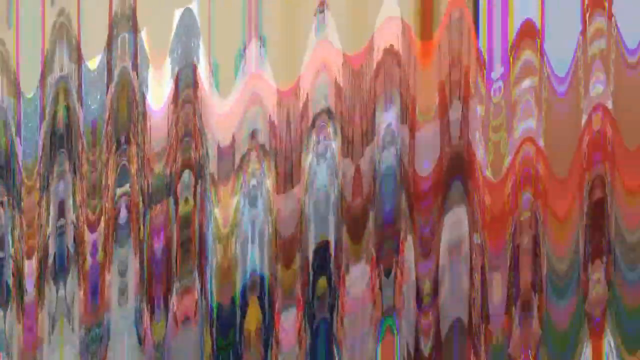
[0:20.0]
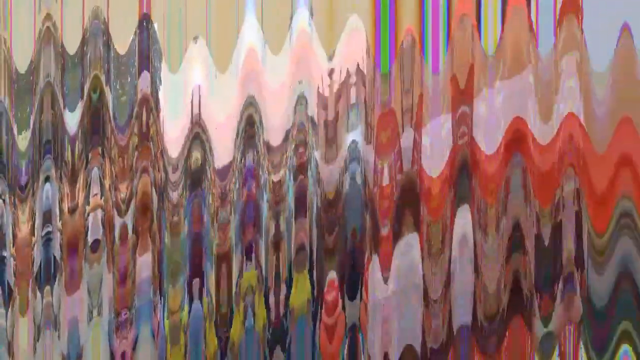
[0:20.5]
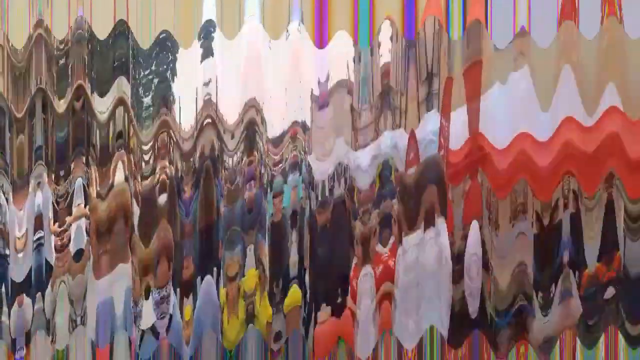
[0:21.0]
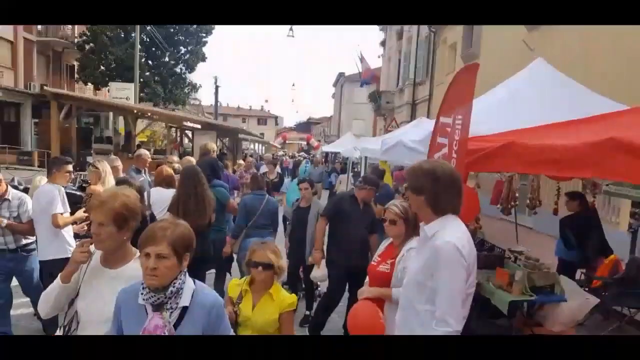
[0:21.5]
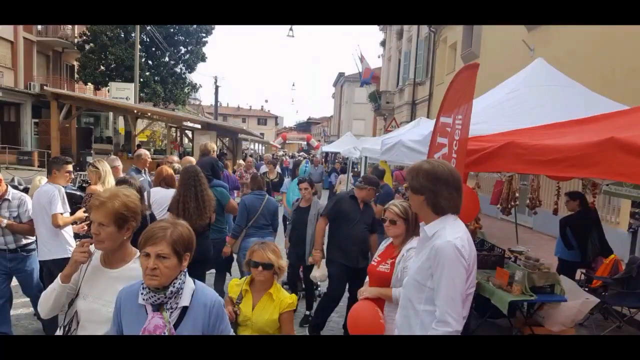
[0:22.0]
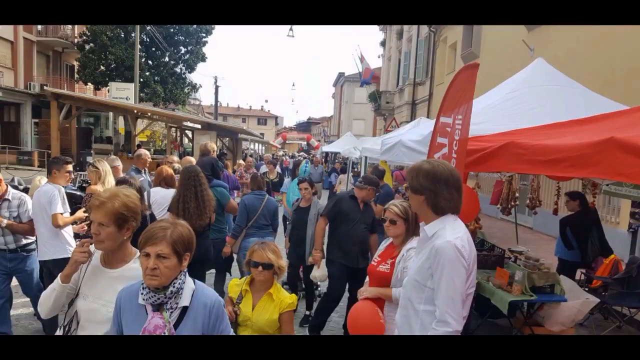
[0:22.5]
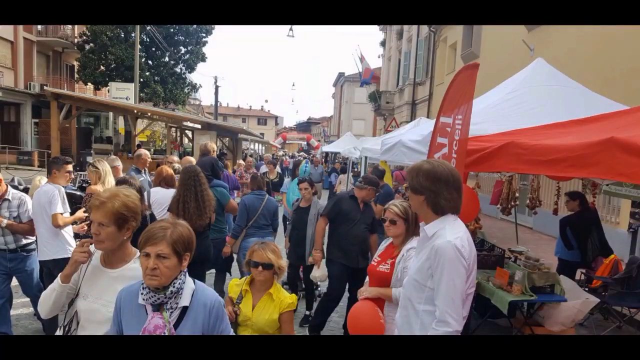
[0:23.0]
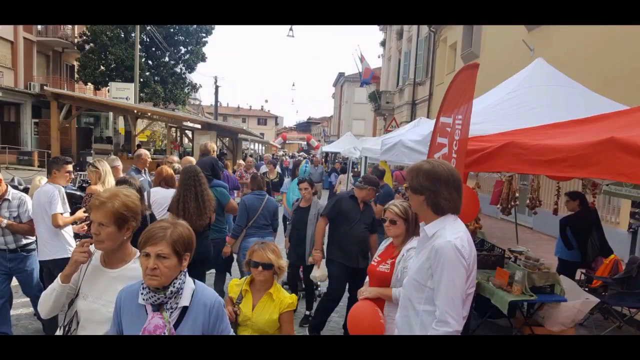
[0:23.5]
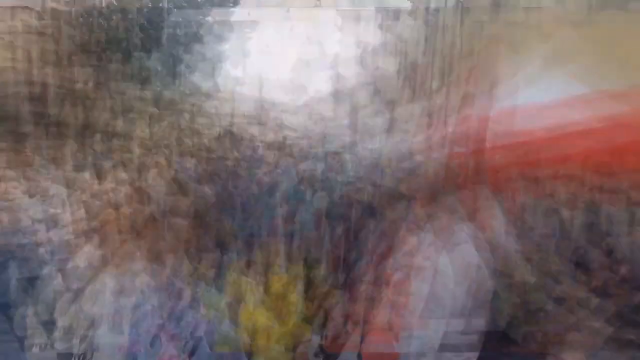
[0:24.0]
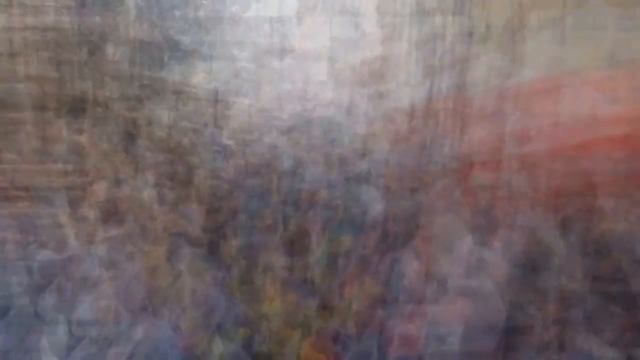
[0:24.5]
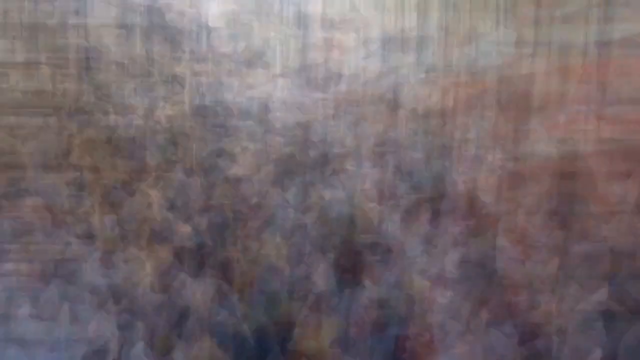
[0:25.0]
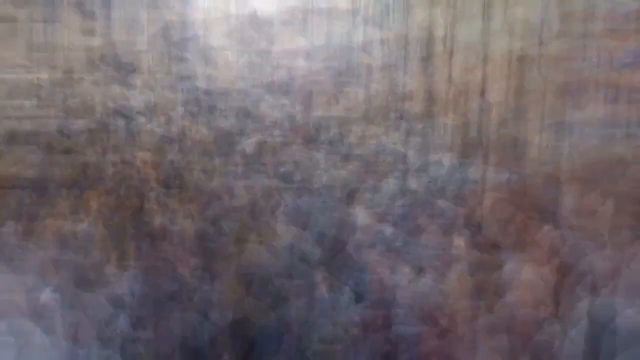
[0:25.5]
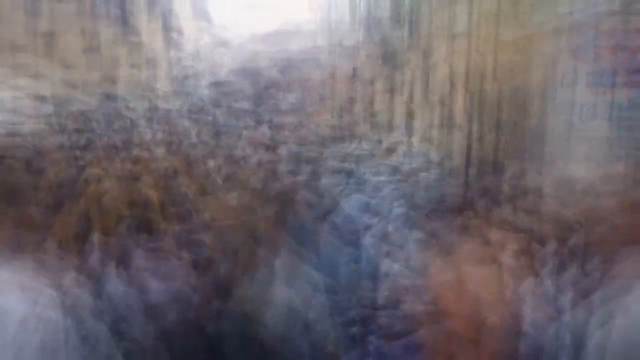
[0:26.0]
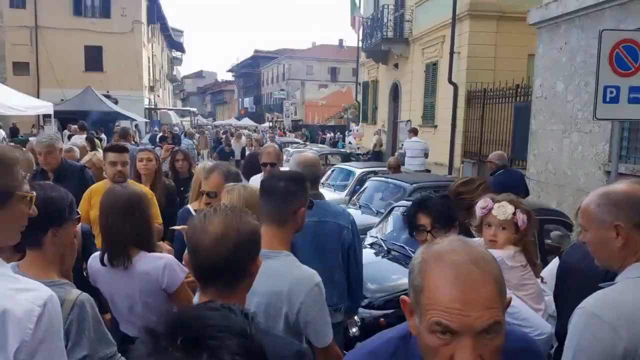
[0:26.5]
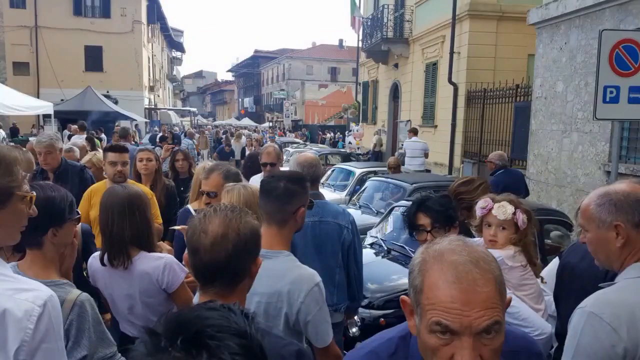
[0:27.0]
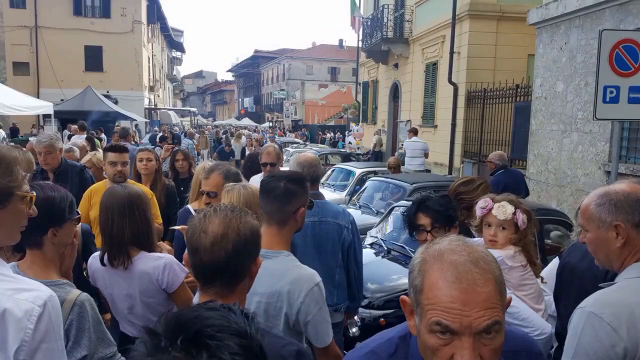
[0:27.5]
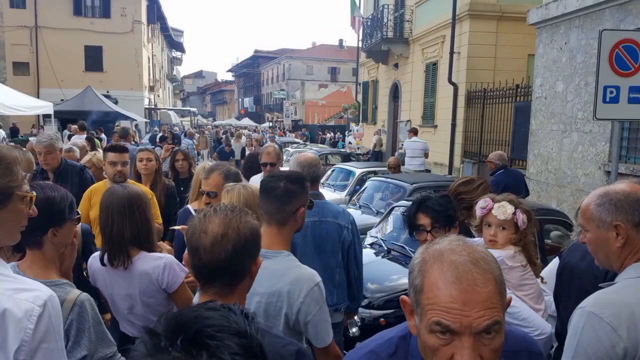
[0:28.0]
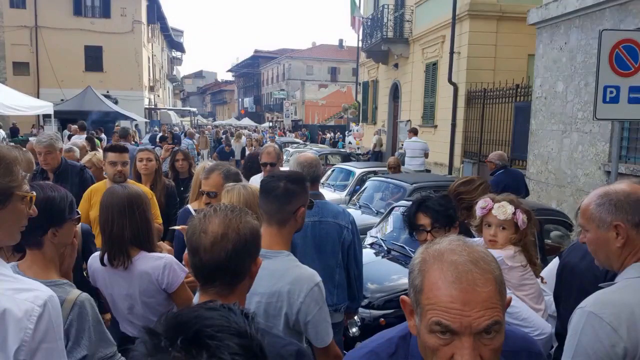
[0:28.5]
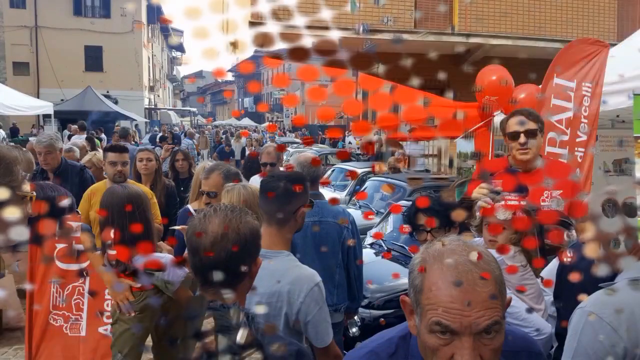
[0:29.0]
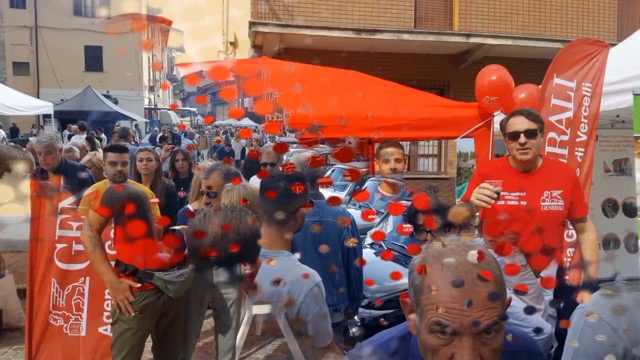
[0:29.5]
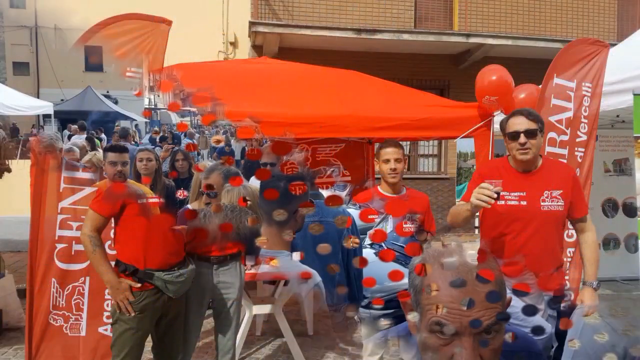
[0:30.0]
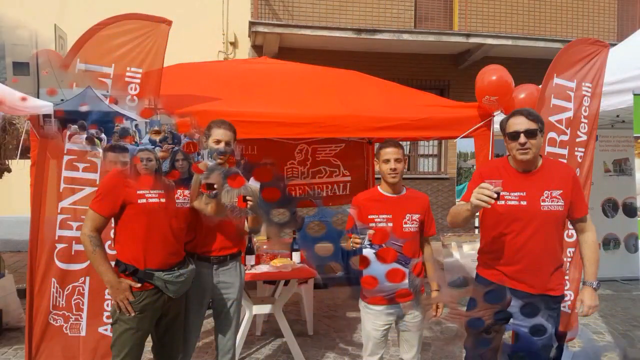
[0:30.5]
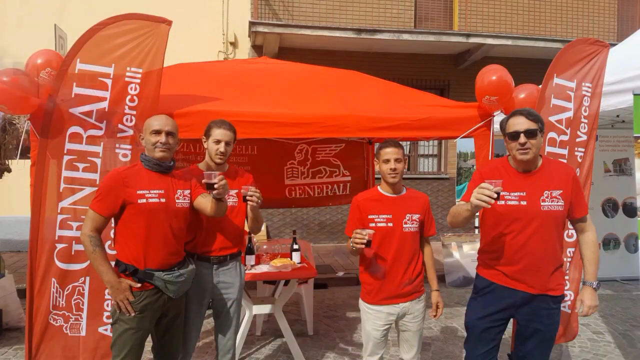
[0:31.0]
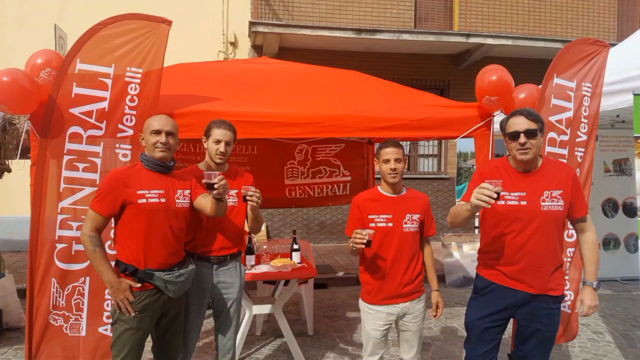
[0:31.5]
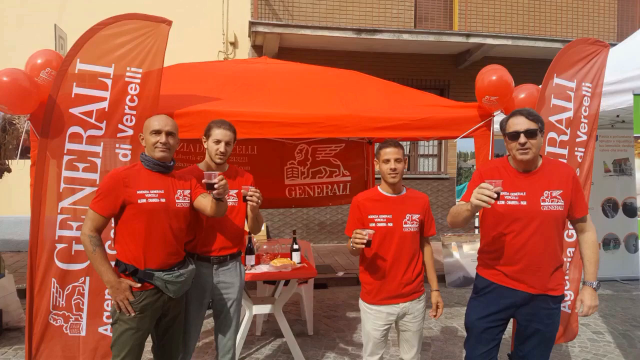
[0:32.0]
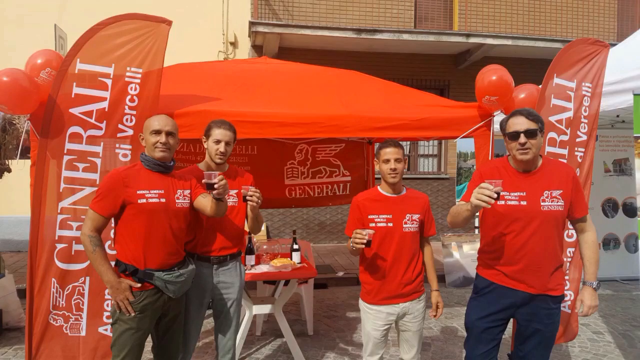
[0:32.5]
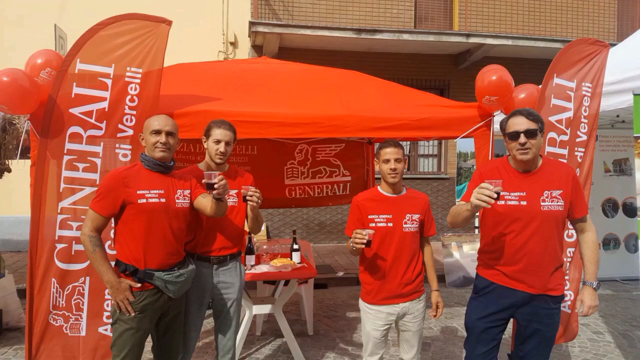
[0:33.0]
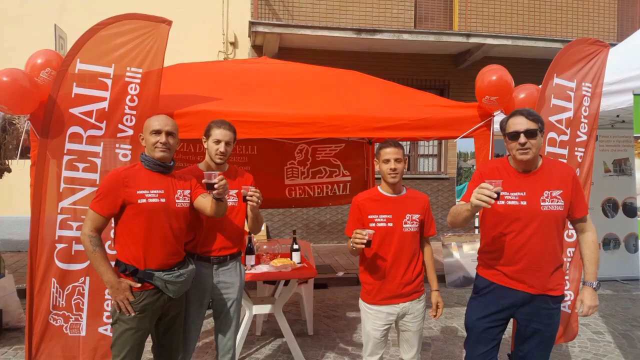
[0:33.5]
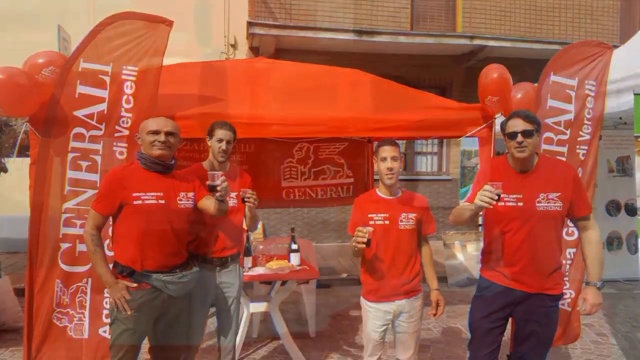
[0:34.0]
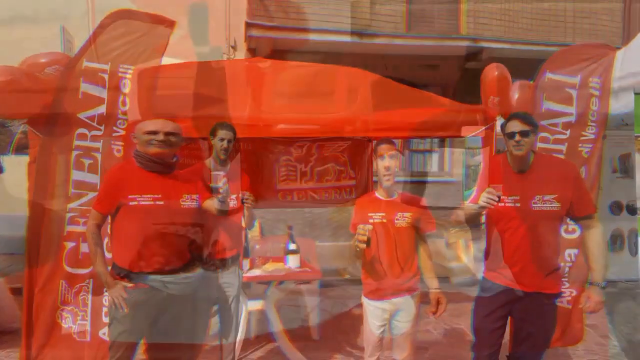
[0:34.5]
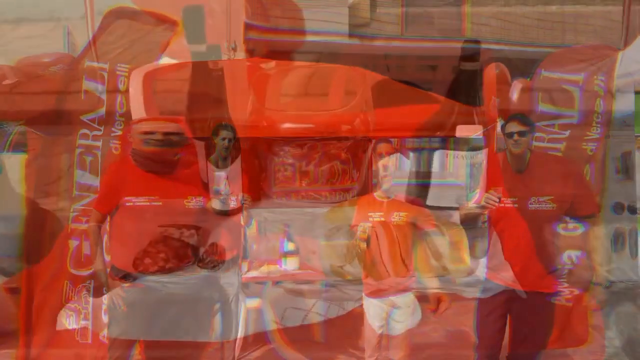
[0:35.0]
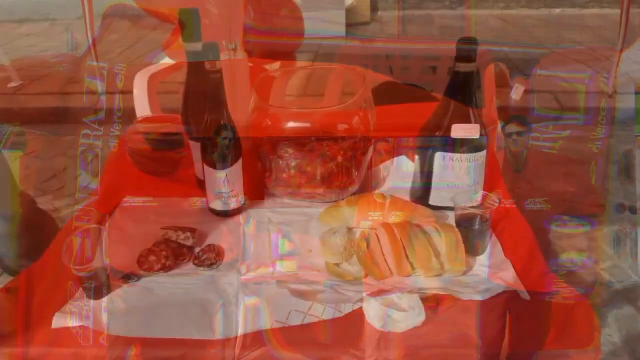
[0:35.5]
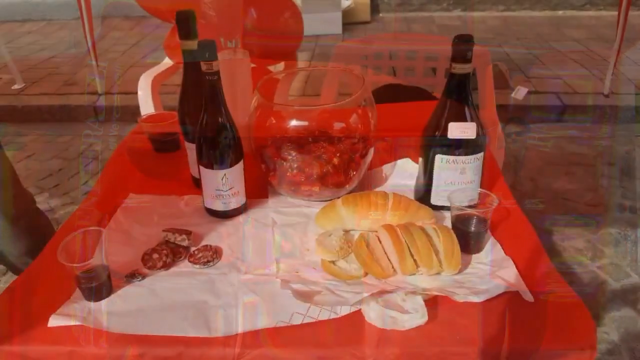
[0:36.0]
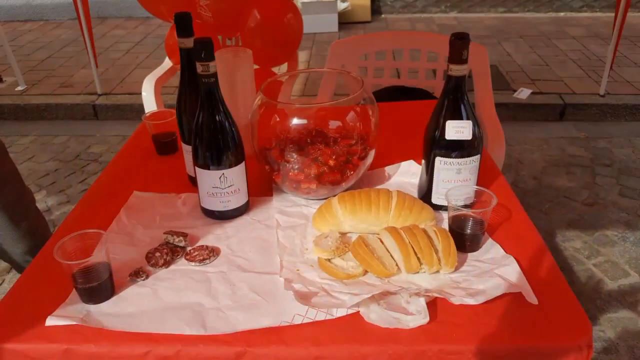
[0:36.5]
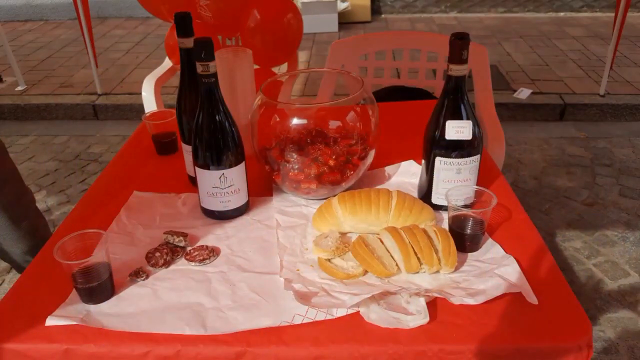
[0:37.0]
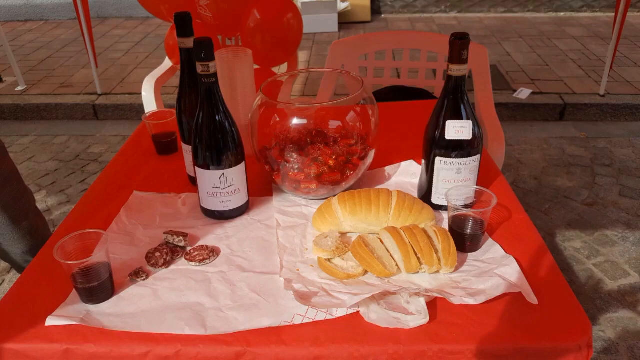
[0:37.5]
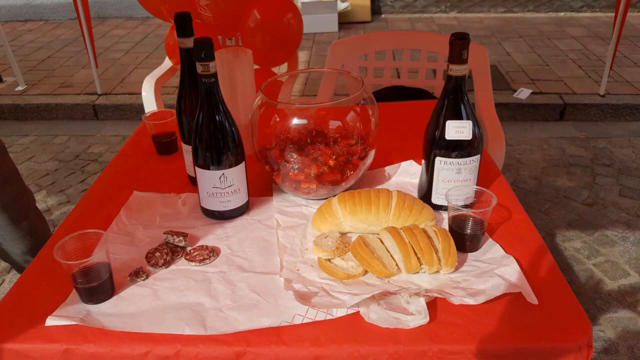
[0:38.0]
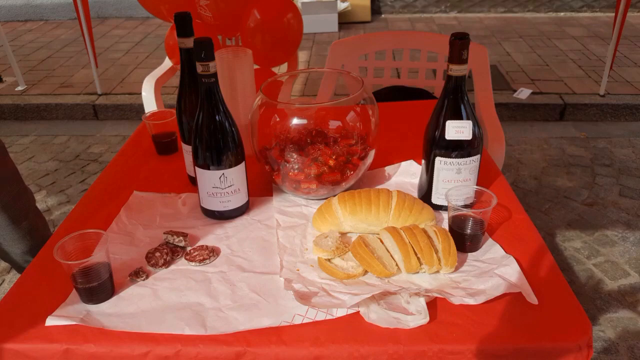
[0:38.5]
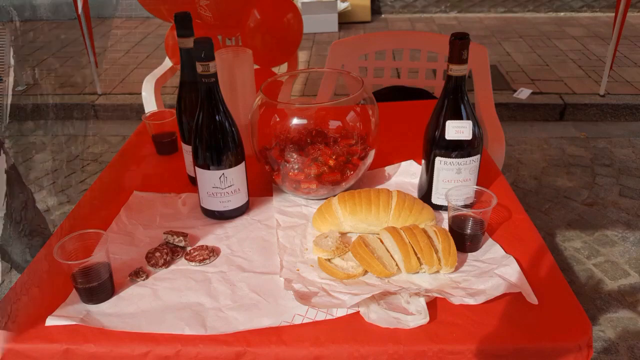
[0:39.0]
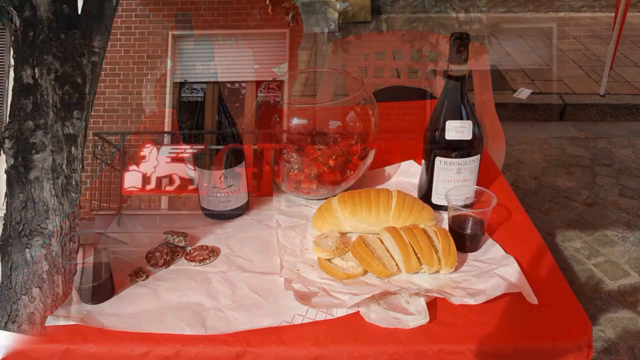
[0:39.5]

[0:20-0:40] Another transition leads to several people walking by the booth, with various pictures from the event showing people passing. A picture follows of four men who work with the company standing in front of the booth, all wearing red shirts and holding small glasses of wine up in their hands as they are about to toast one another before drinking. Another image shows the wine on a table in the booth: three bottles with two or three glasses of wine poured out, sliced bread next to the wine for customers, and what looks like possibly some small meat for customers to eat. The focus stays on the wine for the rest of the shot, showing off what is being sold at the booth.